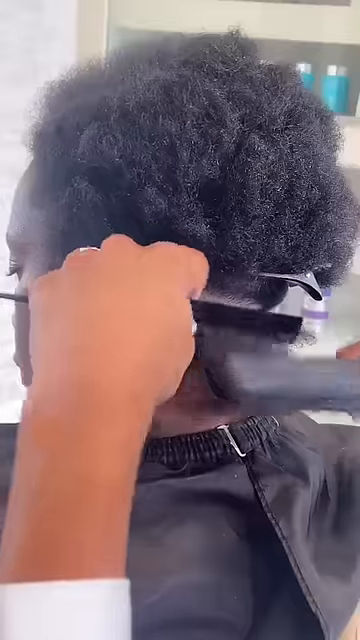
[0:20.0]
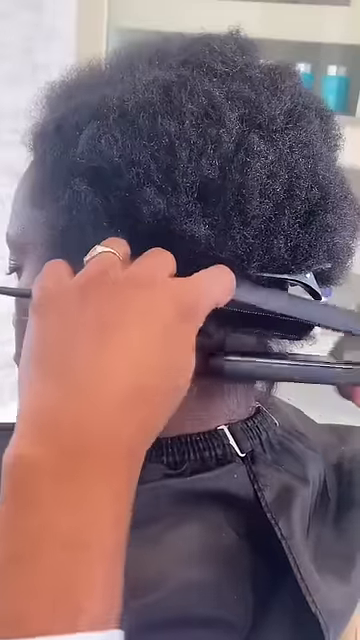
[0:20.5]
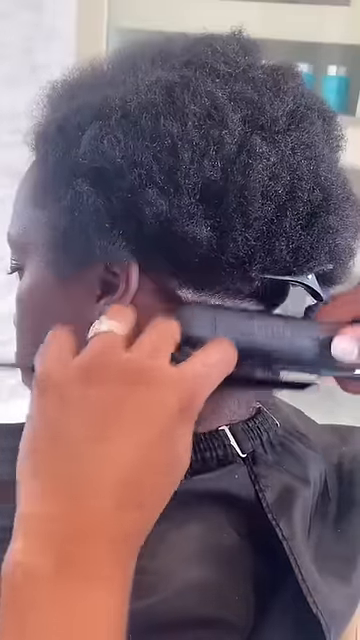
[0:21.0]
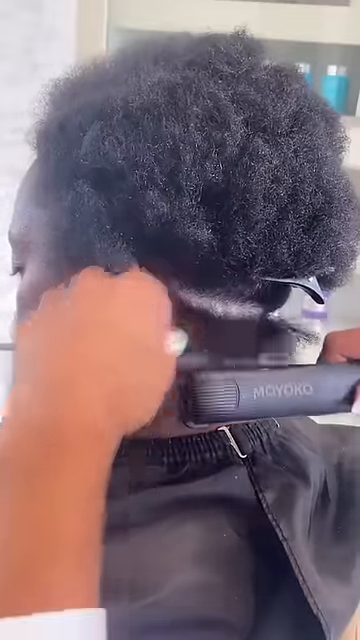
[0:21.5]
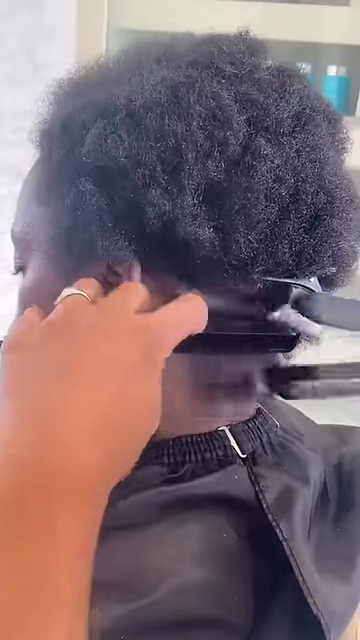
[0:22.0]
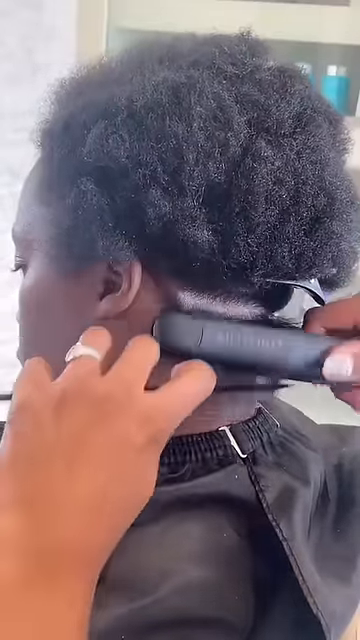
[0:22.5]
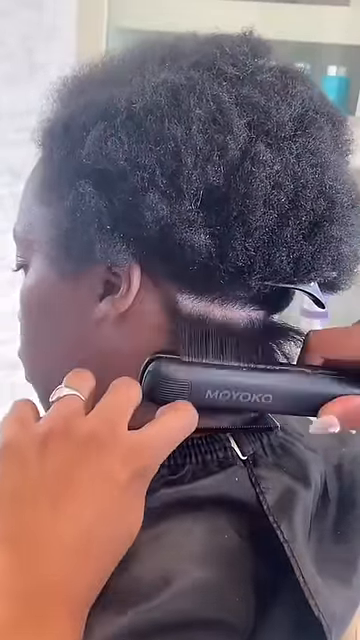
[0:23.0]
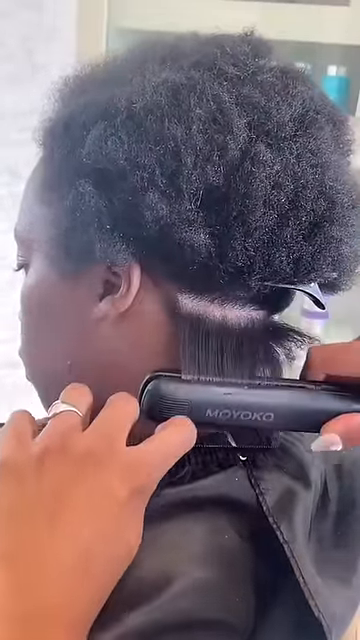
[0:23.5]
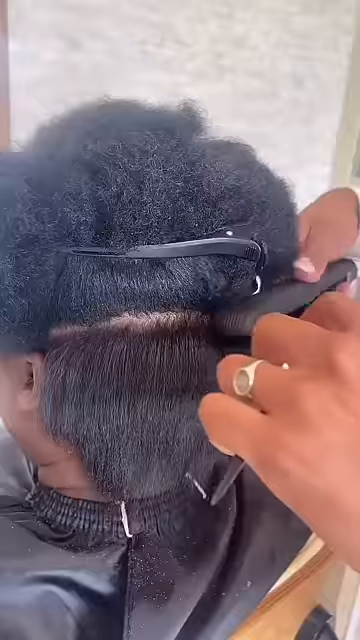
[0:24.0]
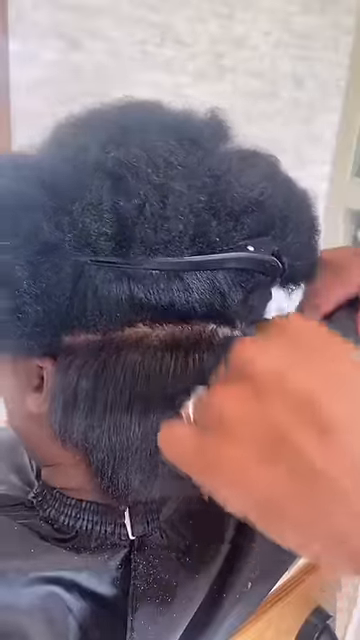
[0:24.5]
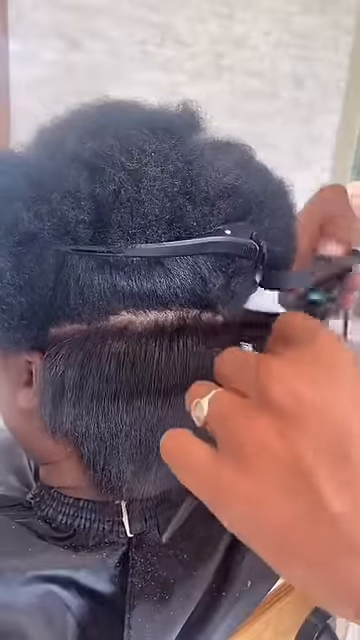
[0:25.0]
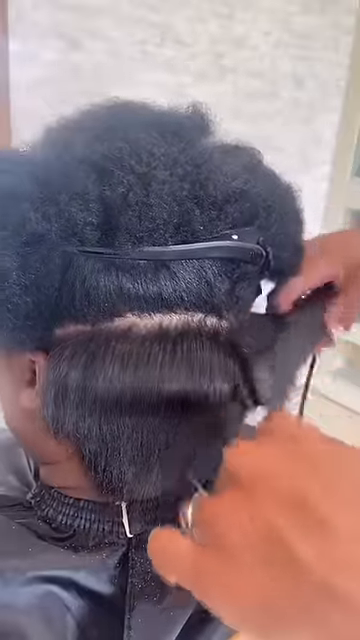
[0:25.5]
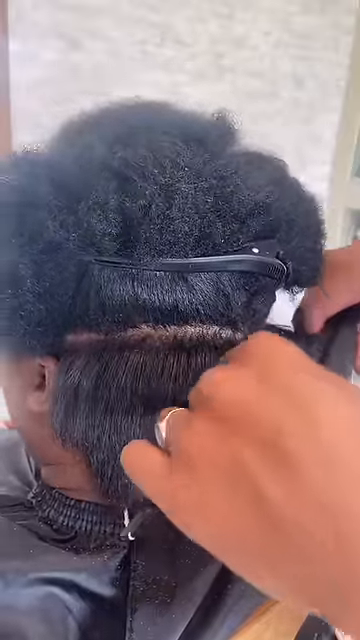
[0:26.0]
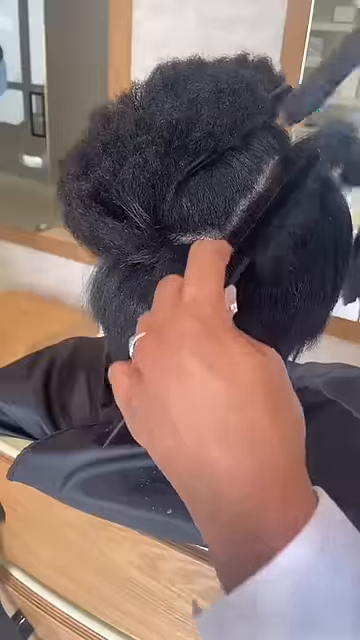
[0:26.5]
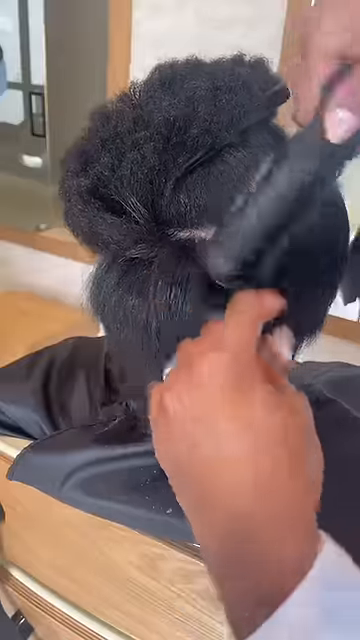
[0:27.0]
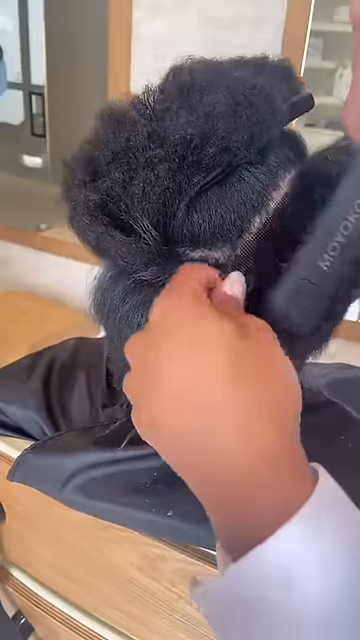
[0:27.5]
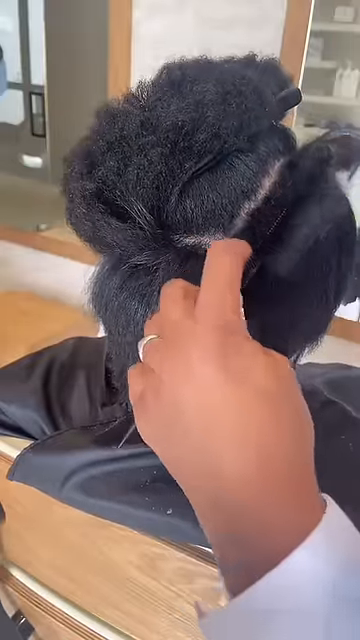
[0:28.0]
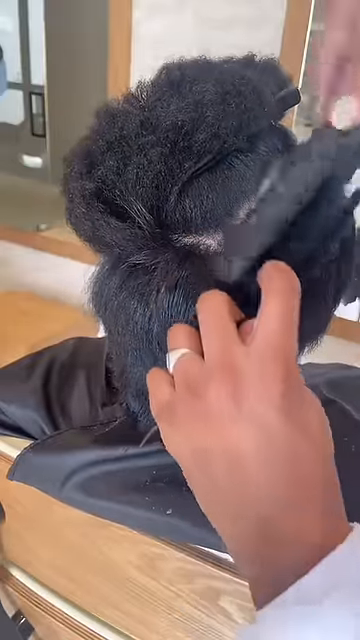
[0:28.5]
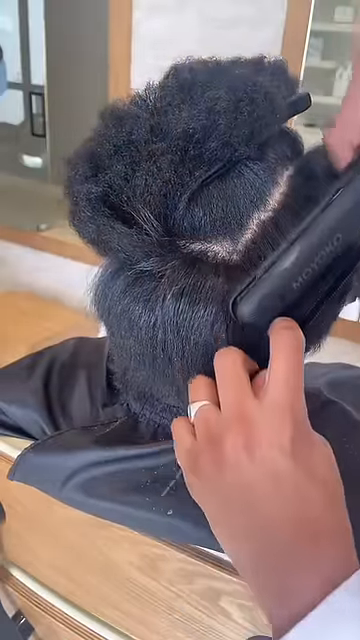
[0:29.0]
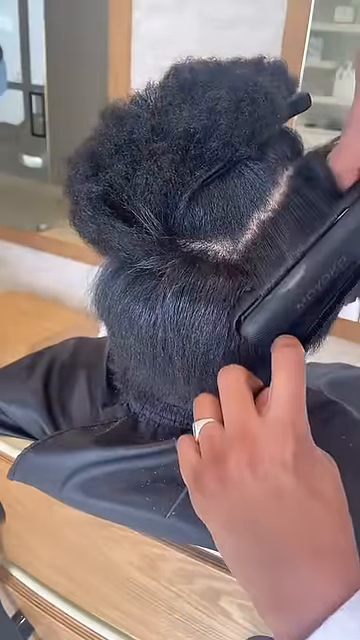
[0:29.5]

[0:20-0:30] The woman's hair is being straightened, with clips holding up different sections. The stylist works from the nape of her neck up towards the crown of her head, straightening out section after section. The cuts come from different angles, some from above, some from the side, some from the left and some from the right, all very close up on the hair itself; some show the side of the woman's face, while others show just her head. Only the stylist's hands are visible. The stylist seems to be a woman and also looks like a Black woman, with darker, medium brown skin; she wears rings on her fingers and has manicured nails painted pink.